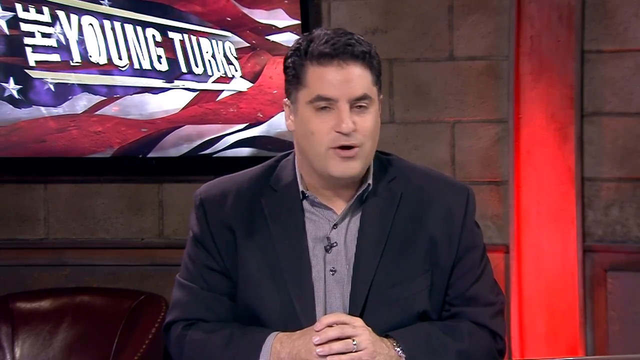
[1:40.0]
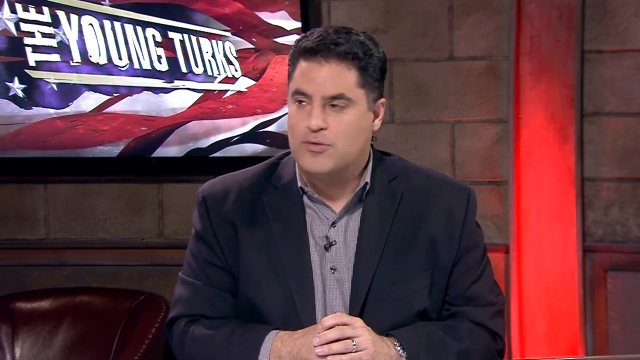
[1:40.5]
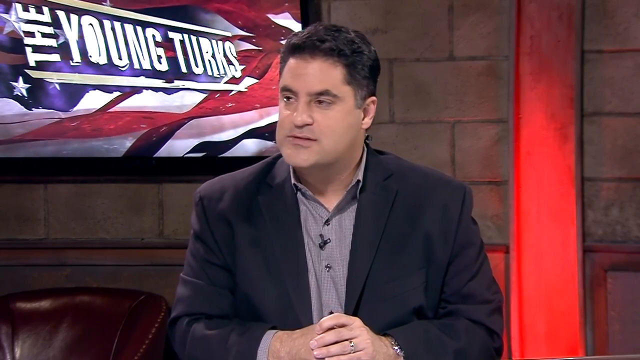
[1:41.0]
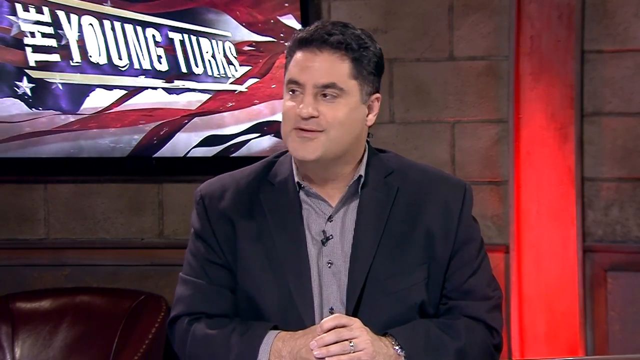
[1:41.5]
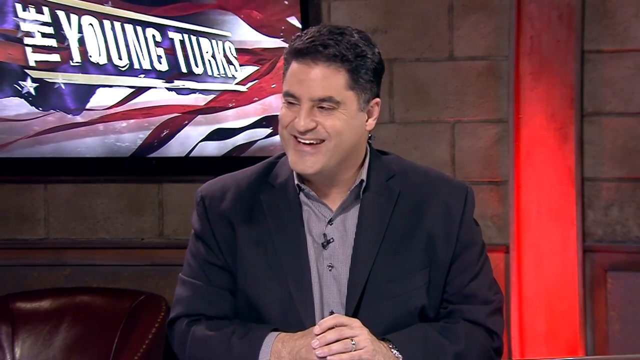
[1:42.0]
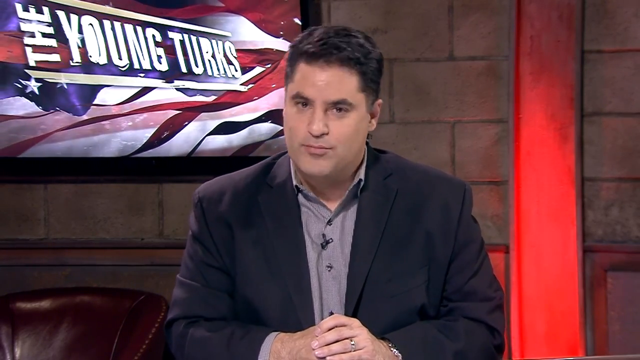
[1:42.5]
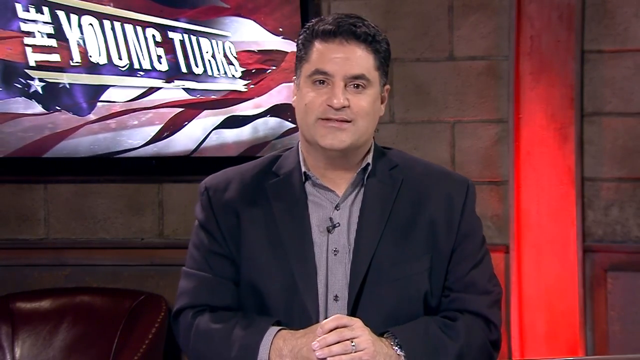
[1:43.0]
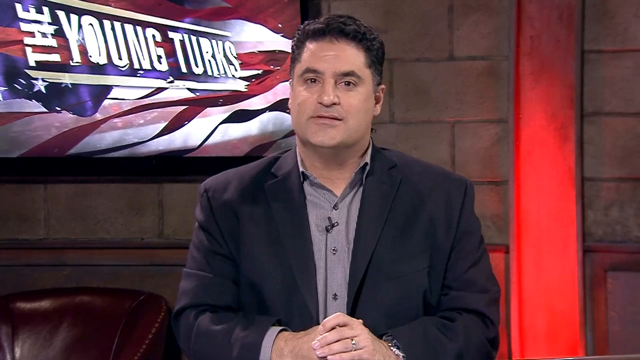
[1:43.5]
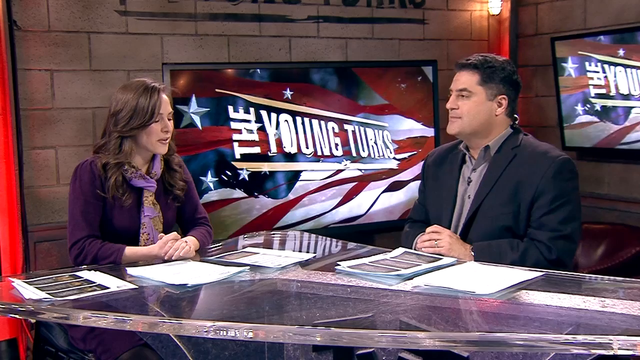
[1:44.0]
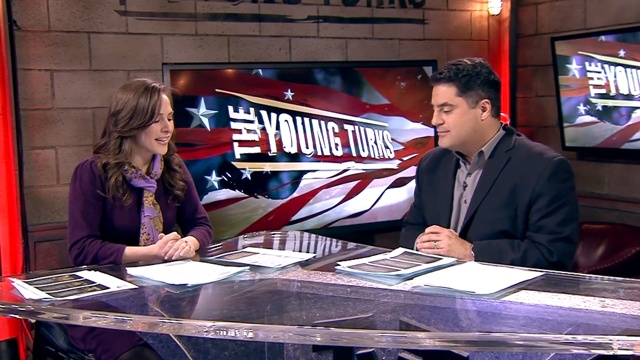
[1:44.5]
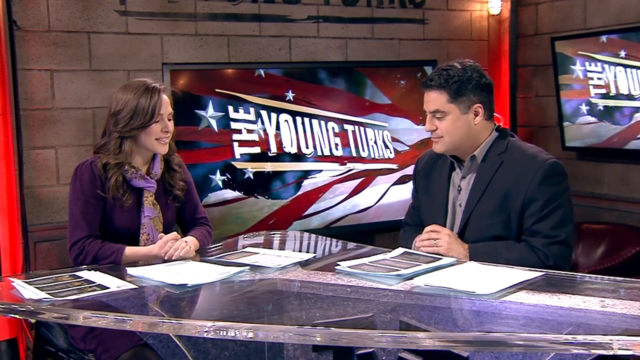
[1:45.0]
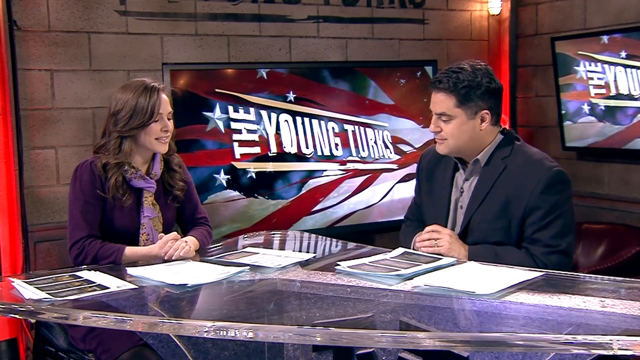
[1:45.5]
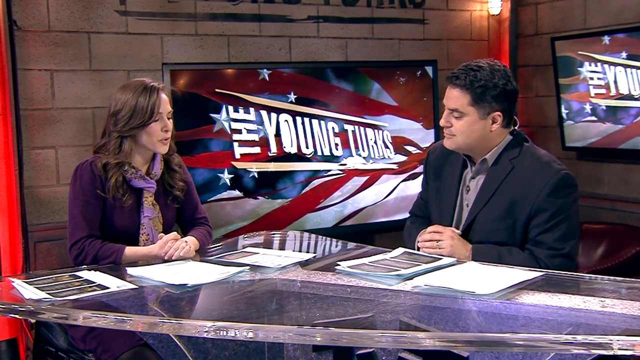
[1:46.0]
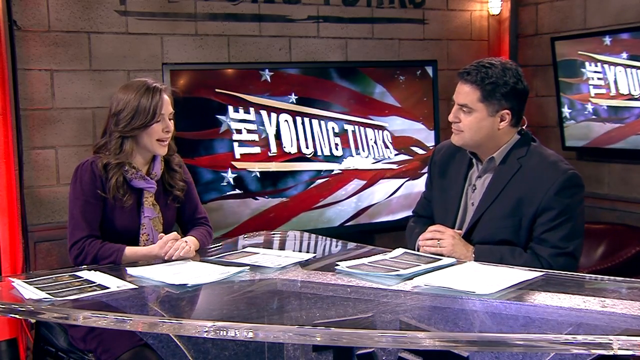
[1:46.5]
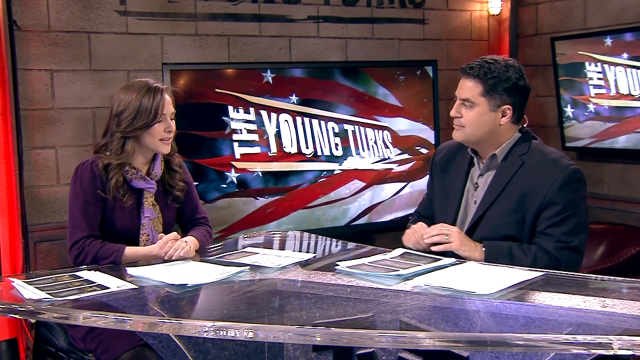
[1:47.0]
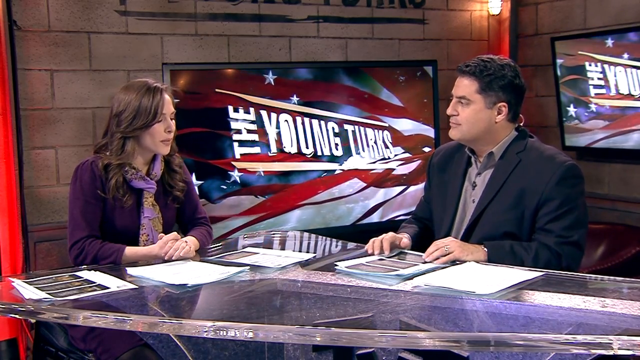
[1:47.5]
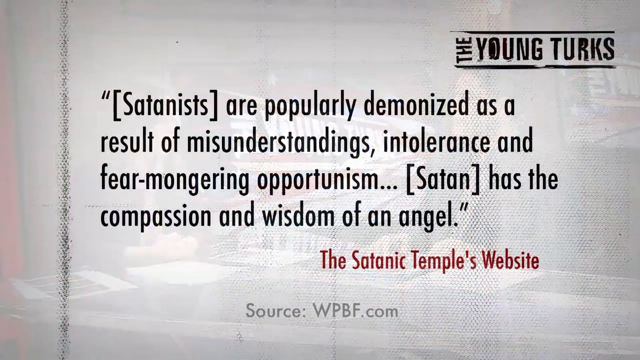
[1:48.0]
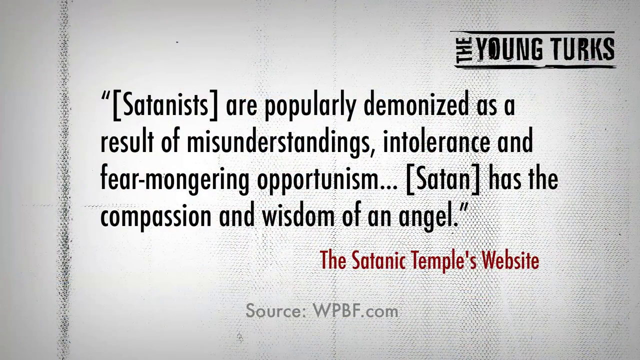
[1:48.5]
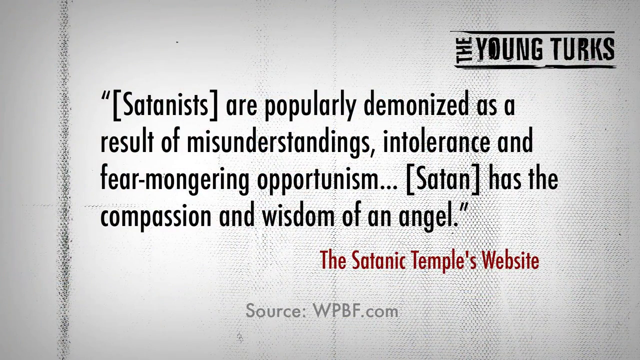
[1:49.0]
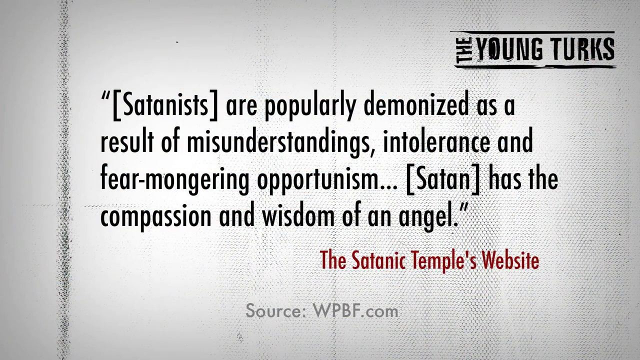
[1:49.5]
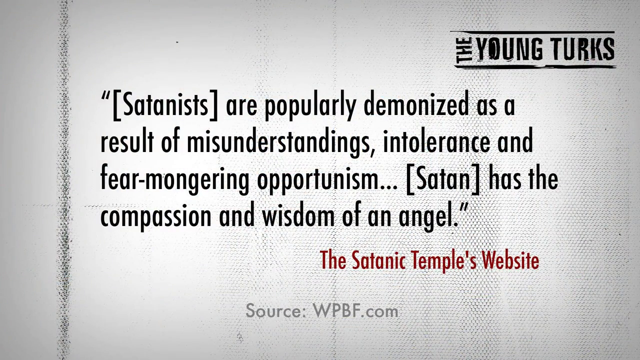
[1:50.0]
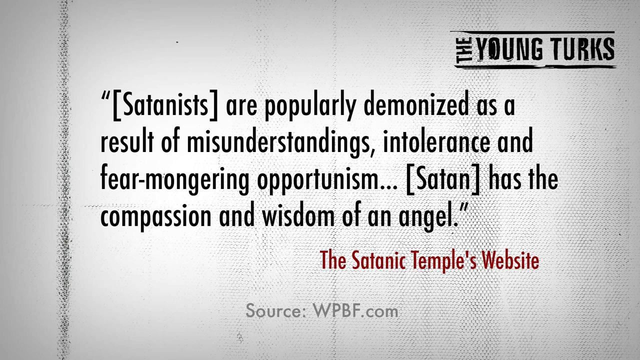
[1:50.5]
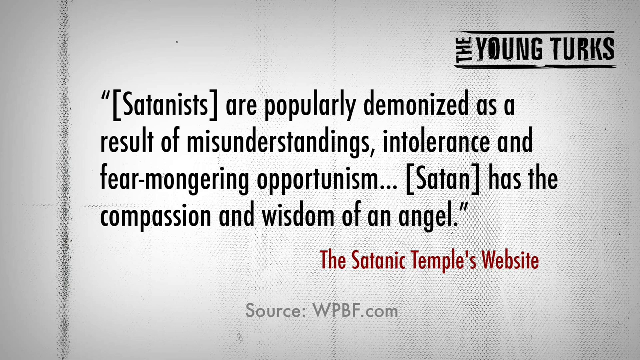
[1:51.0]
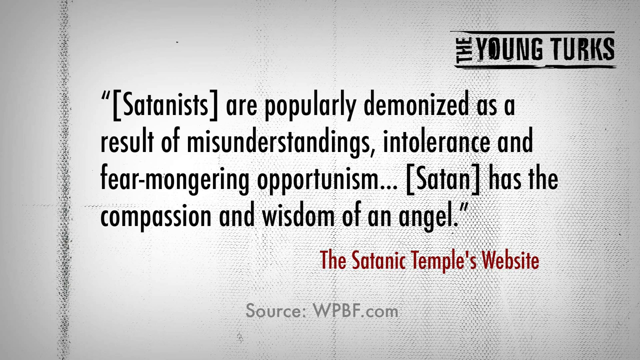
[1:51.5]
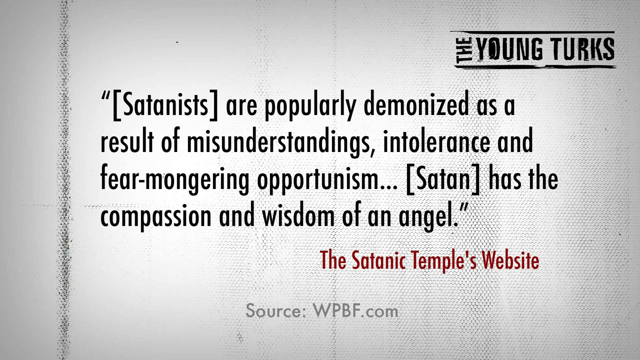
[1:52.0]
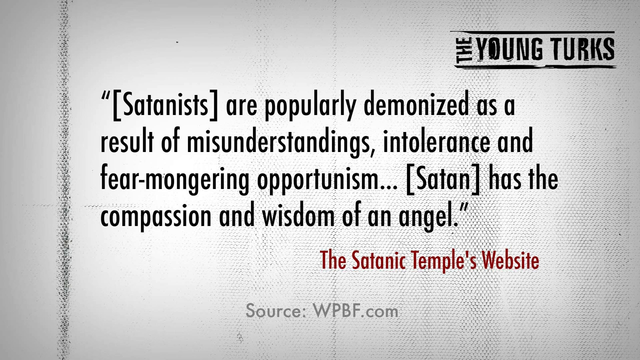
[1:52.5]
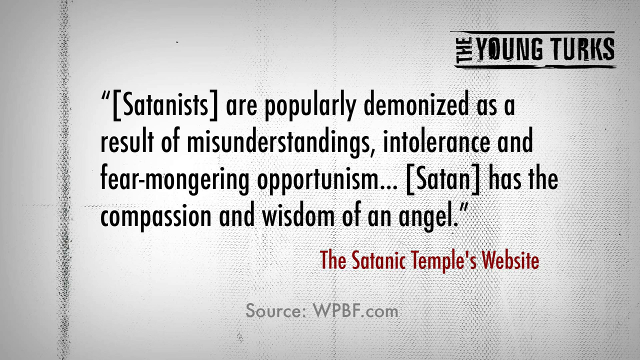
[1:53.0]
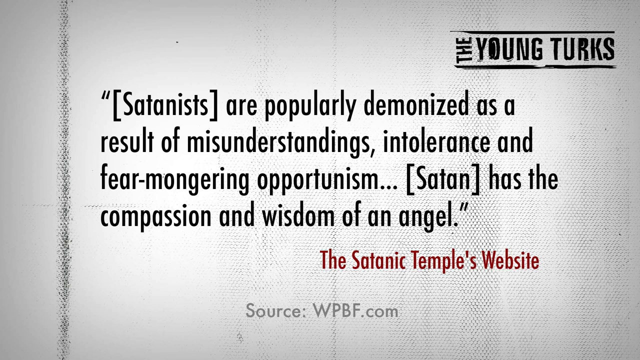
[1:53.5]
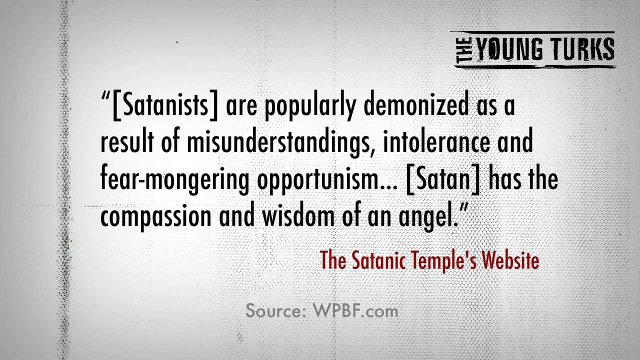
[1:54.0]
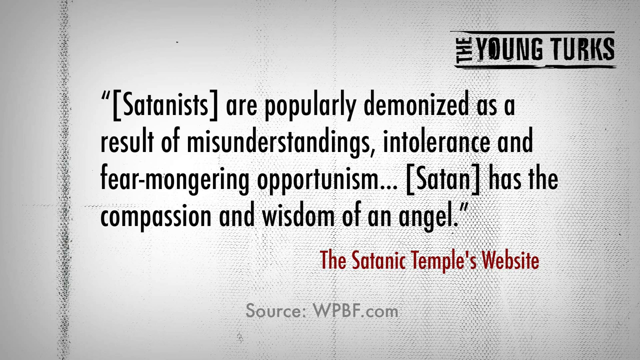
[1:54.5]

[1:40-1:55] The male reporter sits by himself at the news desk, finishing up his talk and looking at the camera, seemingly making his closing arguments or ending his report. He smiles and somewhat chuckles as he looks over at the other reporter. He wears an open dark blazer, a buttoned-up light gray shirt with no tie, and has darker hair, and he looks somewhat cheerful. The screen then changes to show both reporters. The female reporter is on the left of the screen in her dark purple shirt and a printed light purple and tan scarf, with brown hair worn down; she looks down at the papers in front of her with her hands somewhat clasped in front of her. The man is also sitting, looking toward her and at the papers on his desk, and they have some kind of conversation, possibly discussing what is in front of them. The last screen is a white background with, in quotes, "Satanists are popularly demonized as a result of misunderstandings, intolerance and fear-mongering opportunism. Satan has the compassion and wisdom of an angel." followed by "the Satanic Temple's website".